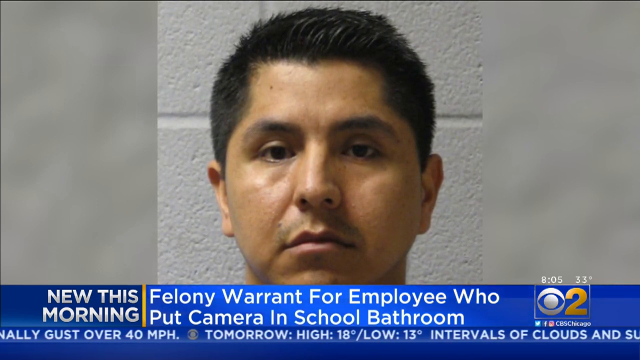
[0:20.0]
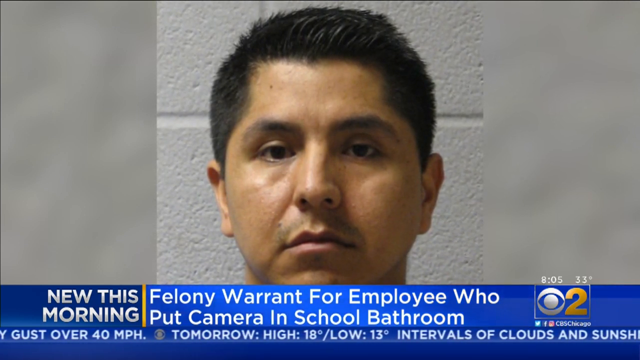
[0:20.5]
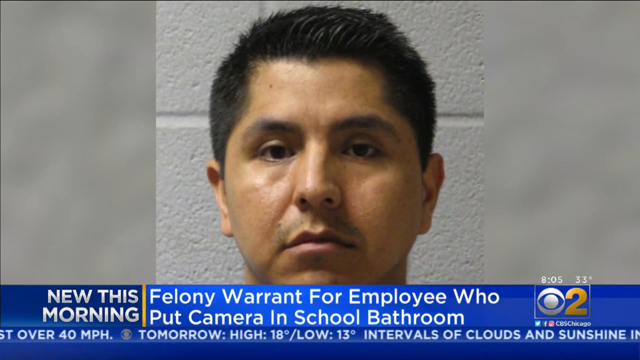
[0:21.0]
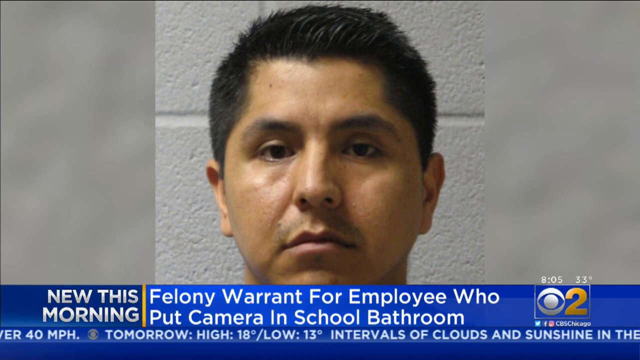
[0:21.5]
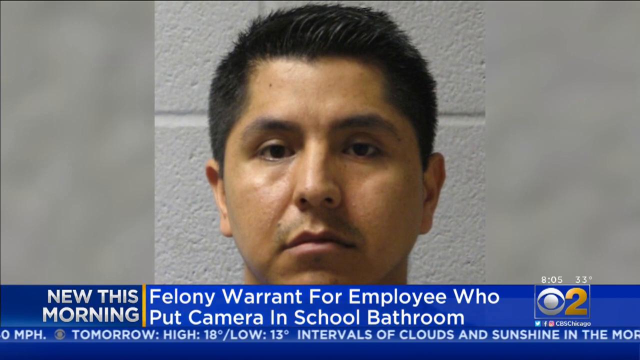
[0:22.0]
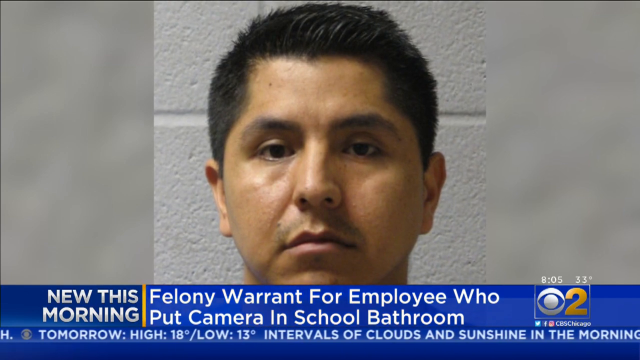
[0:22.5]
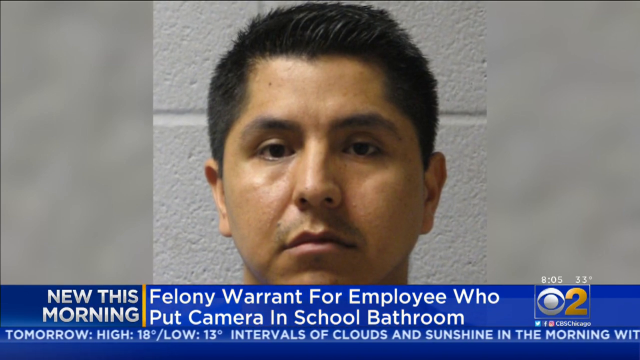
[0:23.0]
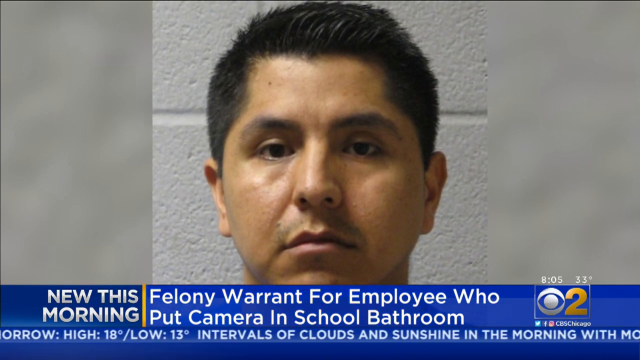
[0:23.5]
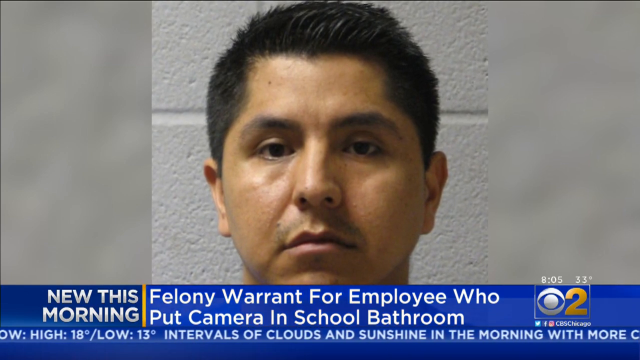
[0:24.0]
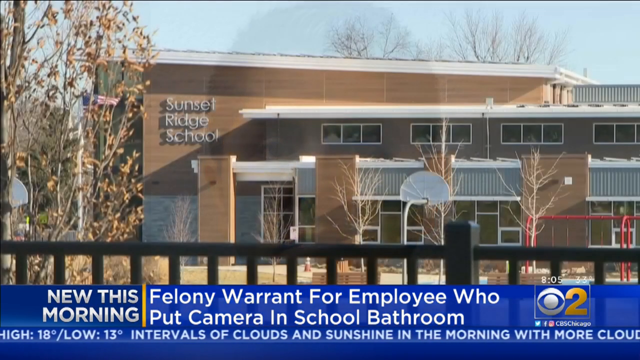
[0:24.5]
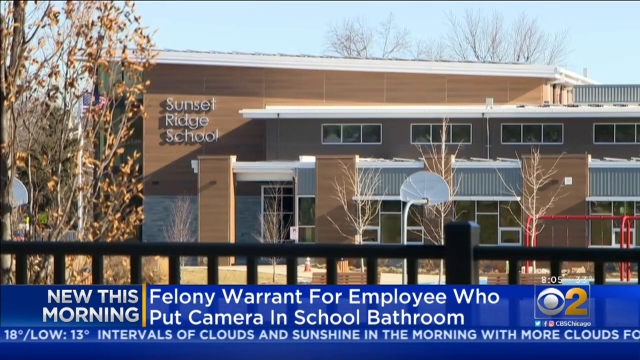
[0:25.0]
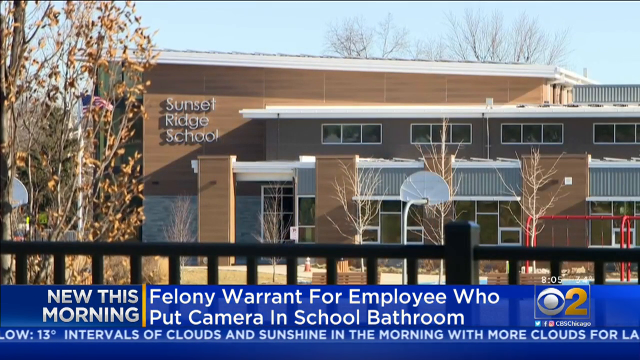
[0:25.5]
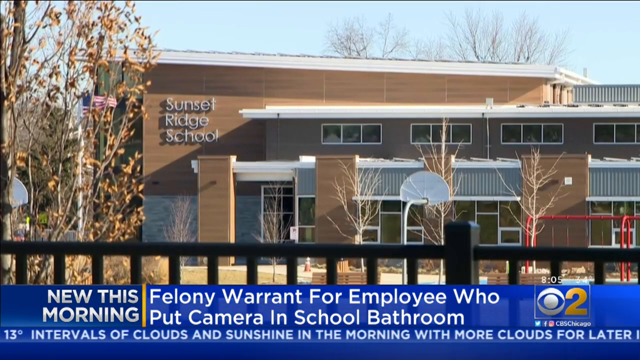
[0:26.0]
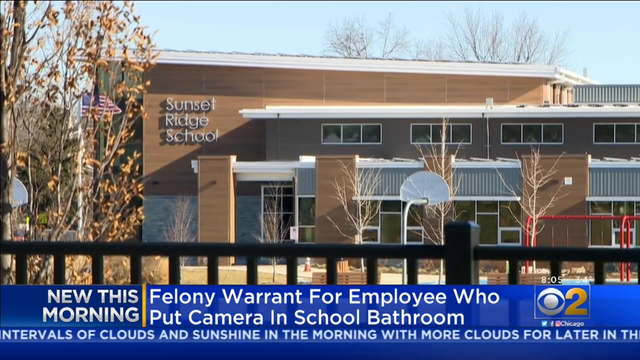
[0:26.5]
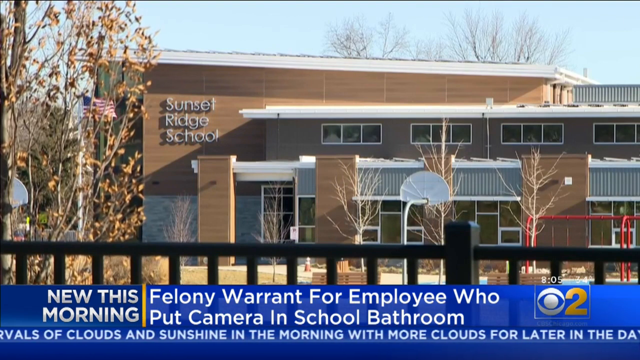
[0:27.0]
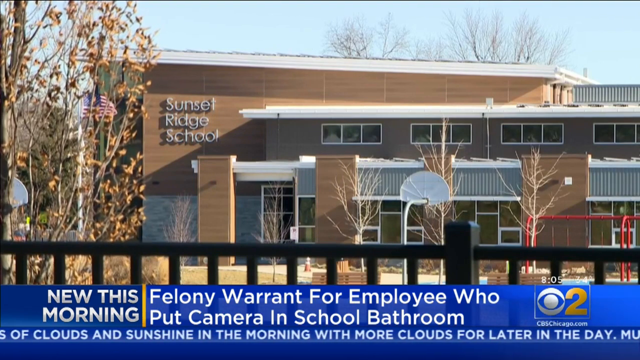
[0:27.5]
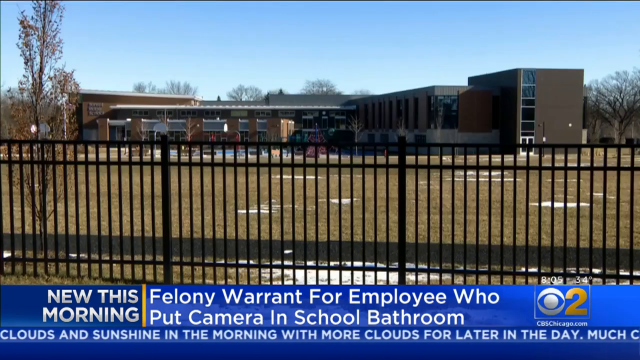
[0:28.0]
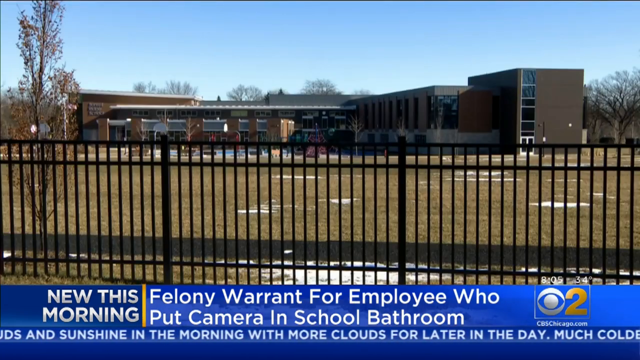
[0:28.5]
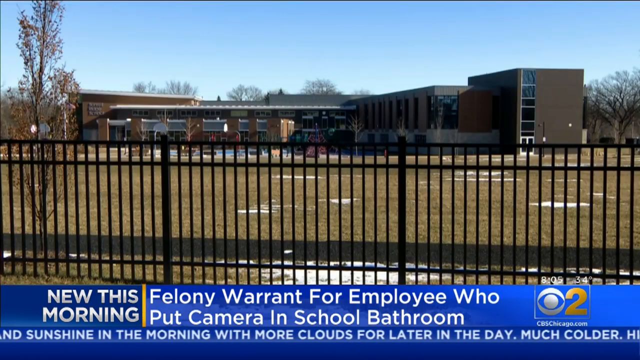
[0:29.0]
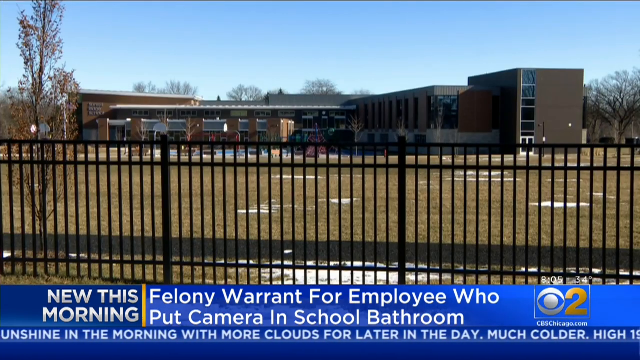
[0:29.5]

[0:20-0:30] The focus remains on the middle-aged man with short hair and a gloomy face. The headline reads "news this morning," along with the words "felony warranty for employees to put camera in school bathroom." The video then shows a brown building with its name written on it: "sunset ridge school." The school compound comes into view, with some plants beside the building and a flag of the United States of America. The video shows the other side of the building in detail, along with a big compound, a fence with grills and a big field; this appears to be the school in question. The shot then changes back to the man with short hair and a gloomy face, who seems to be the man in question.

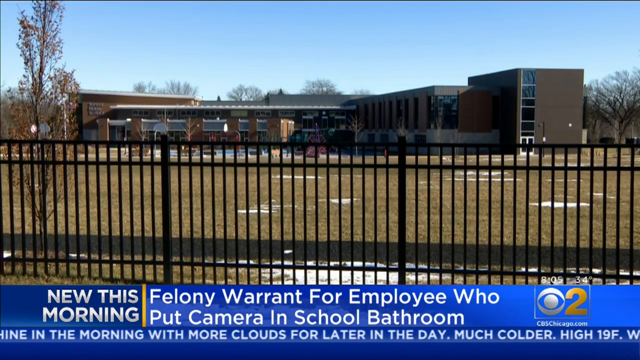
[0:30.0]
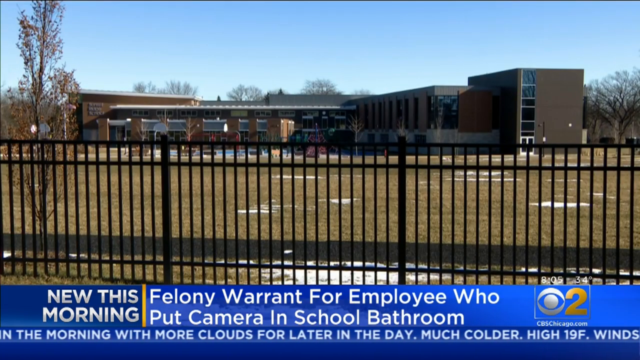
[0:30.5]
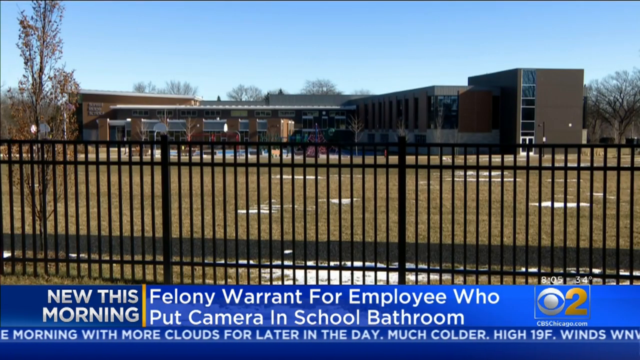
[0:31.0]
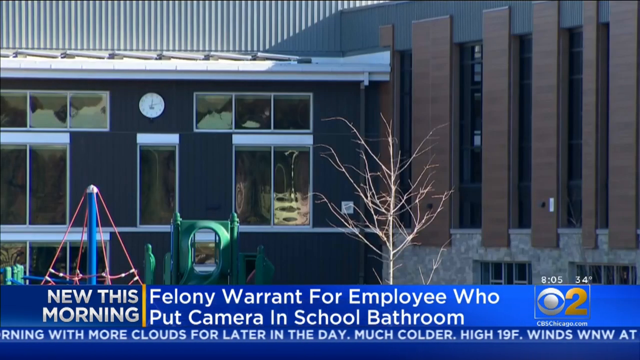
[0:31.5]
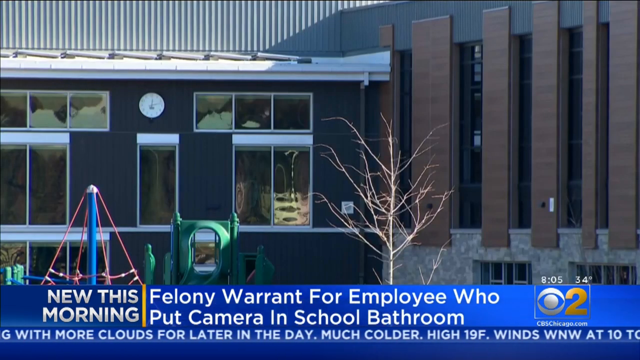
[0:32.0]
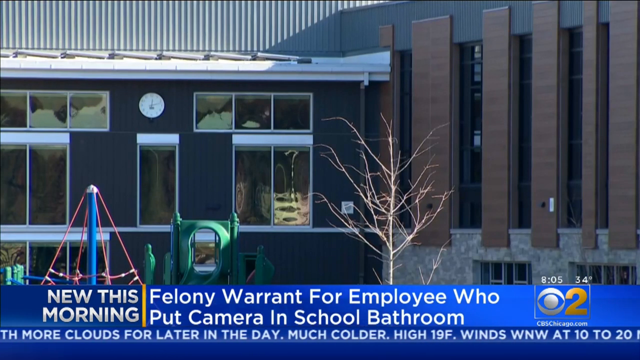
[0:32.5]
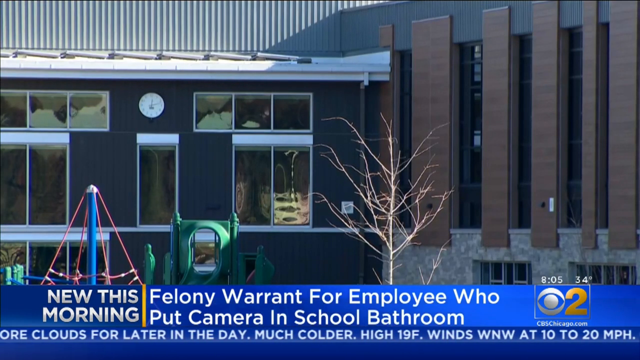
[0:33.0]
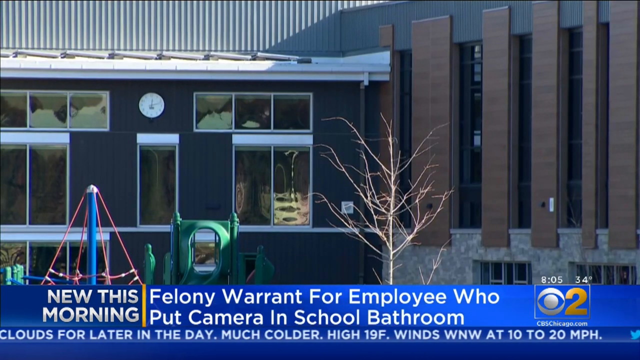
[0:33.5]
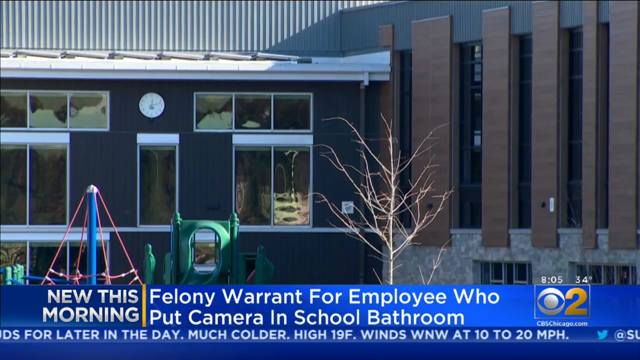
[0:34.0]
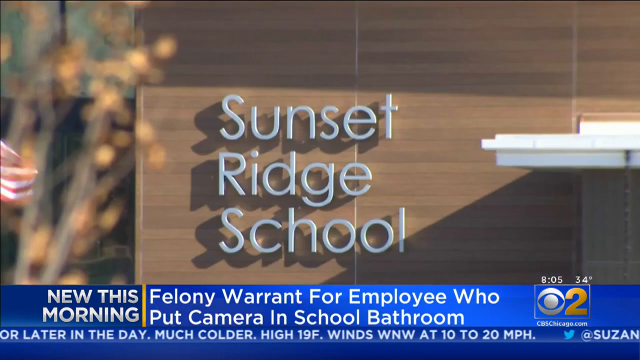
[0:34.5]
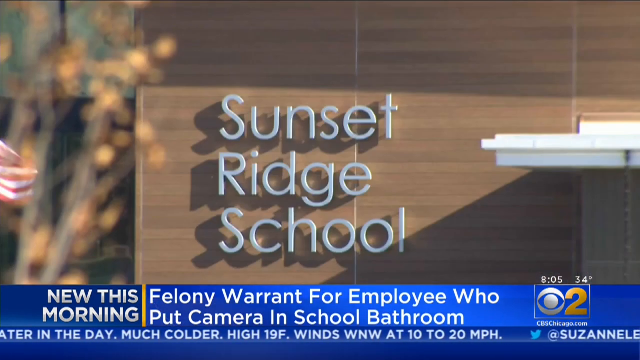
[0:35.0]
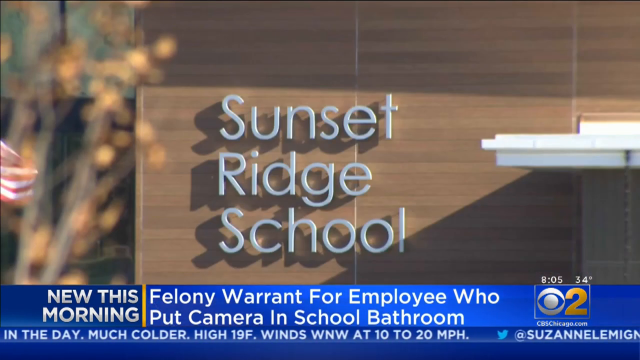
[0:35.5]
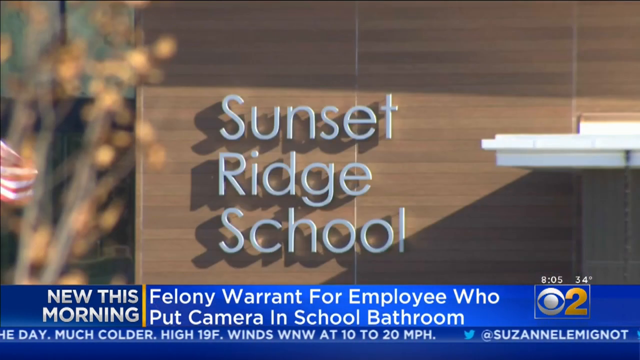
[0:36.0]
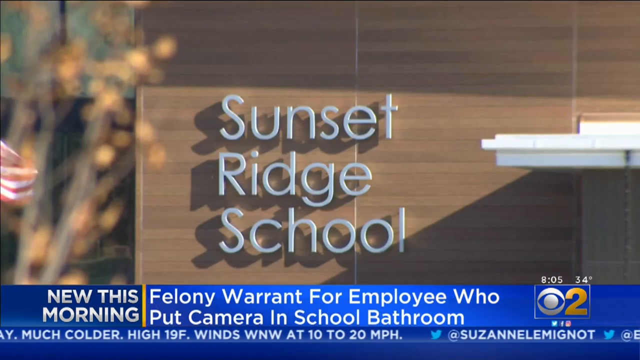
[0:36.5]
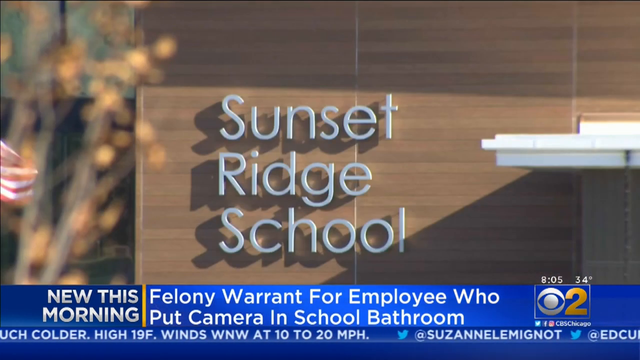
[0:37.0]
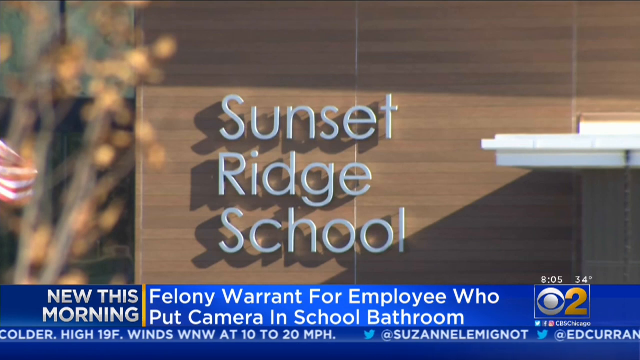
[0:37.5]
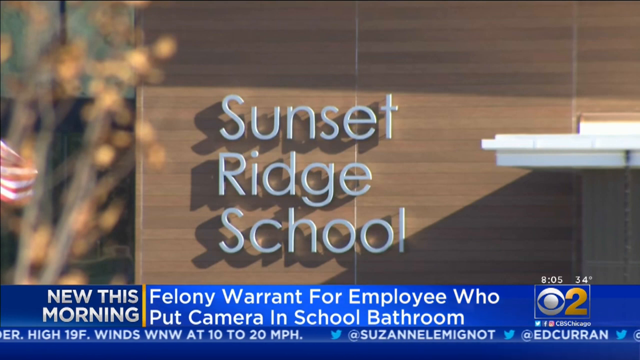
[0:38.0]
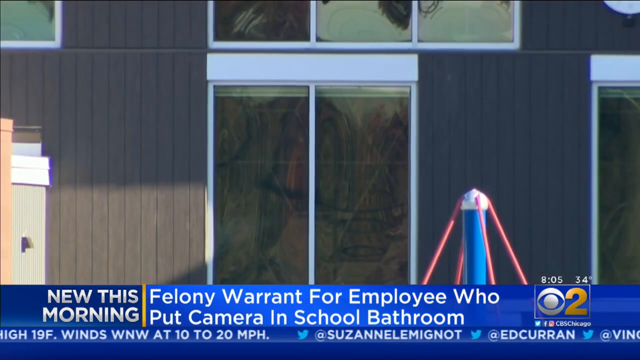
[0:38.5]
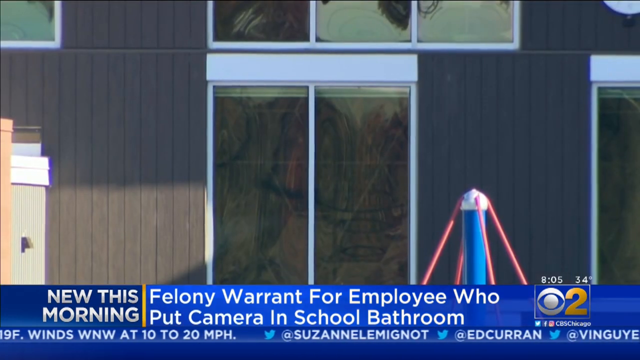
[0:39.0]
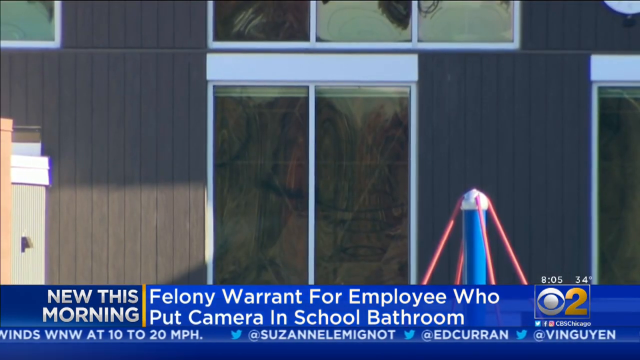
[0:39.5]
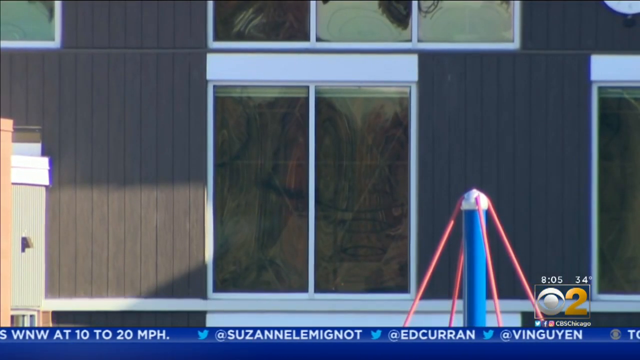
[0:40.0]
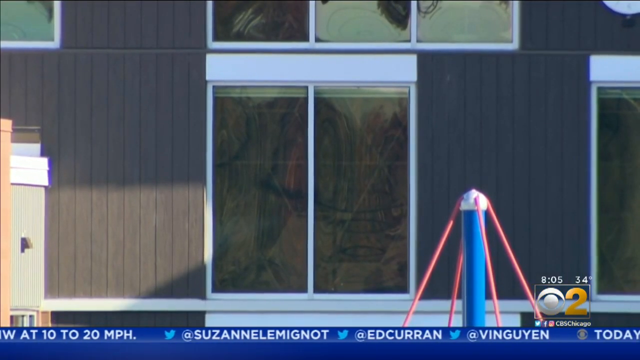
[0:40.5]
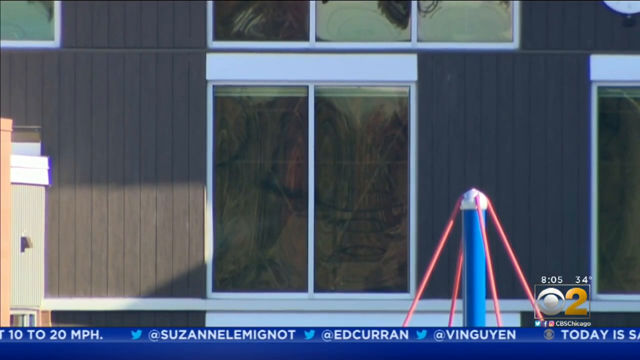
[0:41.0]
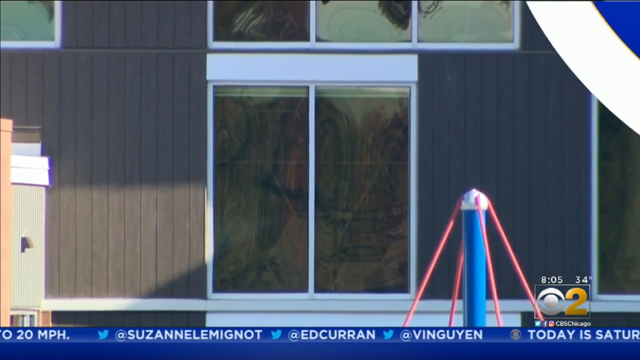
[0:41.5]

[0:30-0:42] Front and aerial views of the school compound and building are shown, including the front of the building and the school's name, Sunset Ridge School. The video shows different parts of the school: a large compound and the field. It focuses on the field and the front of the compound, then zooms in on the school's name, which is clearly displayed. The compound has some dried plants, and a side view of the school is shown. The video continues showing different parts of the school: the compound, the fence, the buildings and the front.